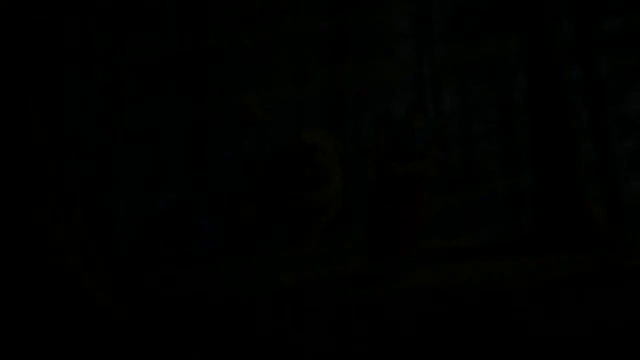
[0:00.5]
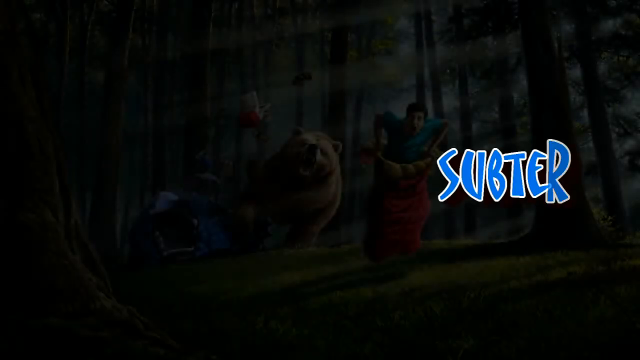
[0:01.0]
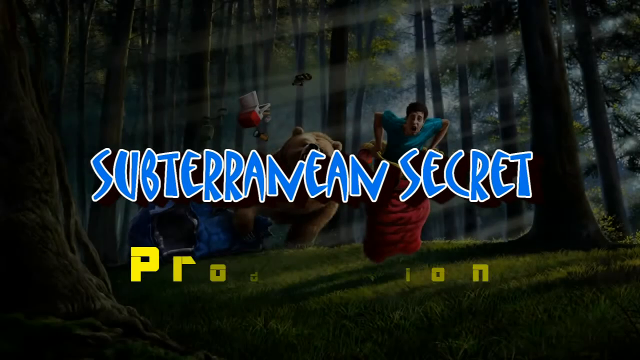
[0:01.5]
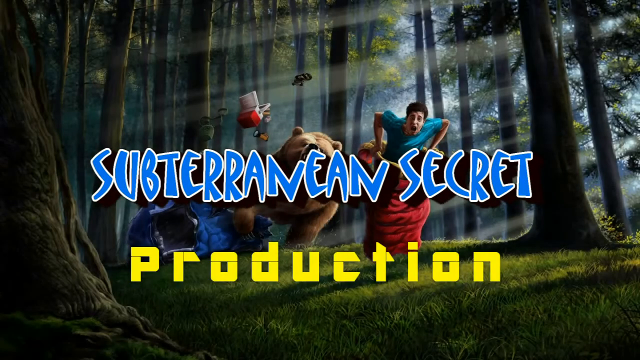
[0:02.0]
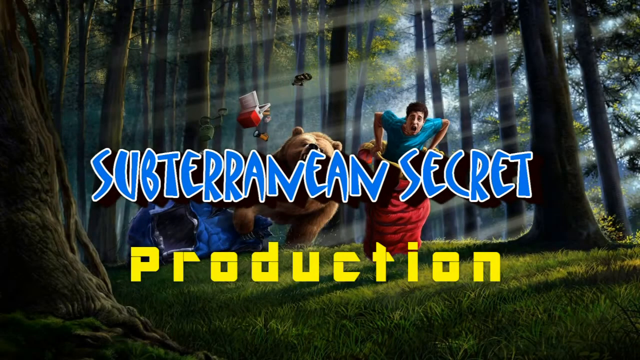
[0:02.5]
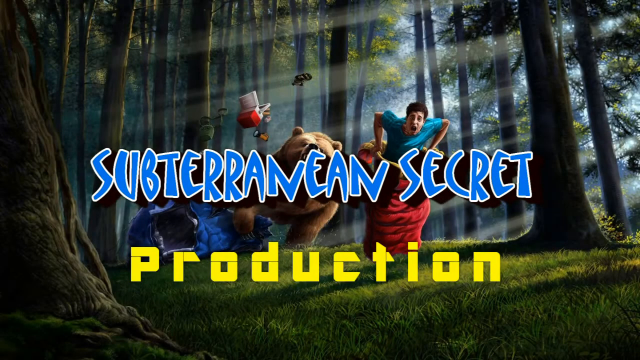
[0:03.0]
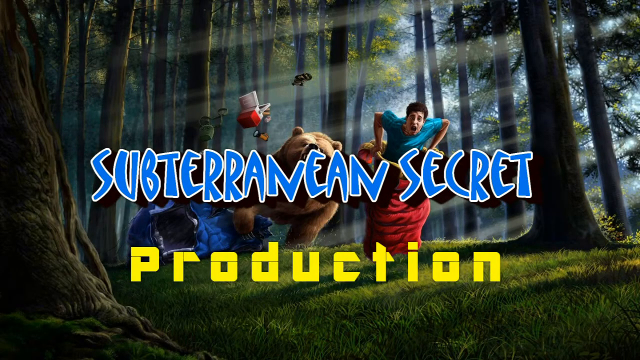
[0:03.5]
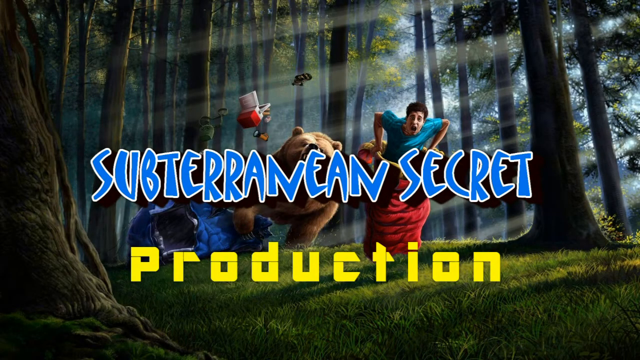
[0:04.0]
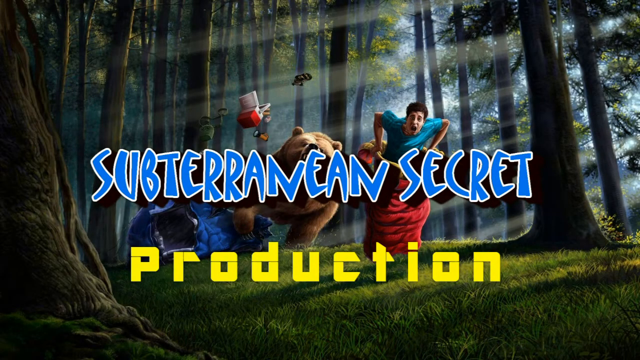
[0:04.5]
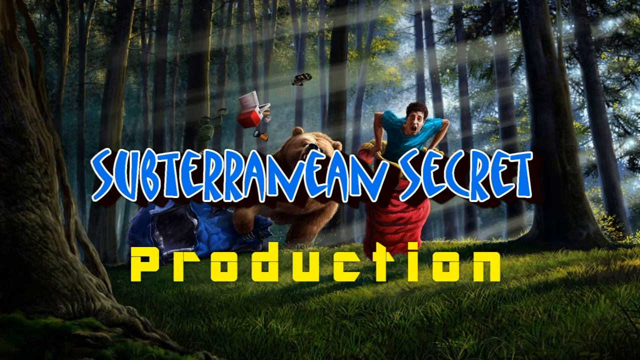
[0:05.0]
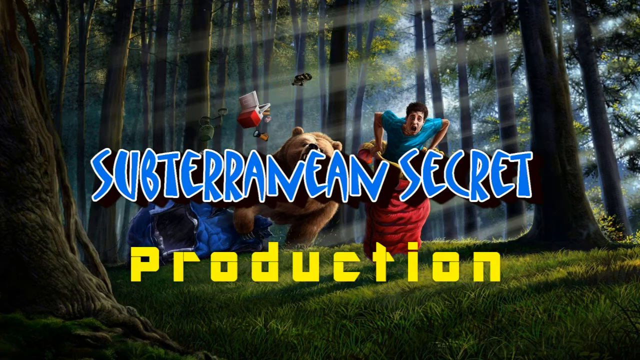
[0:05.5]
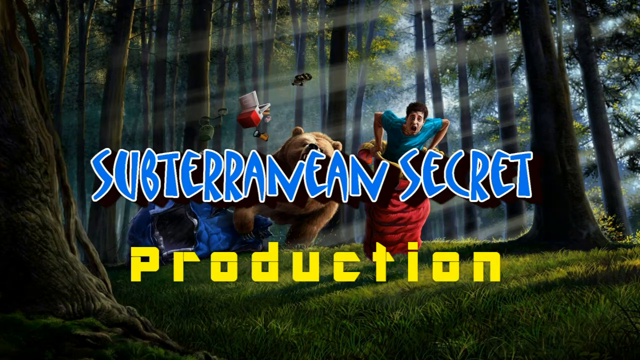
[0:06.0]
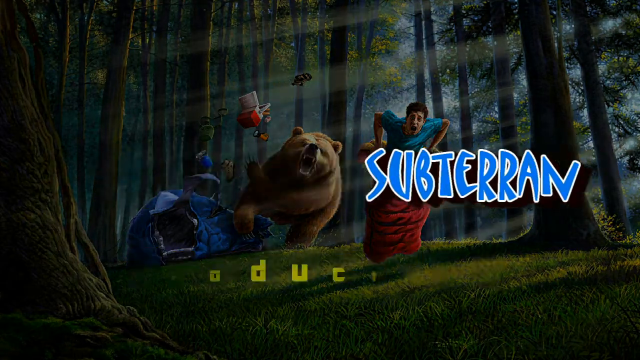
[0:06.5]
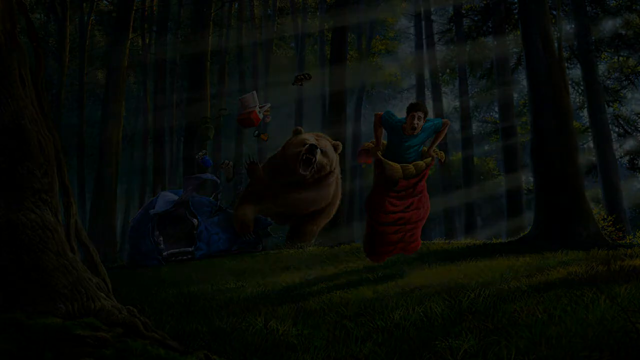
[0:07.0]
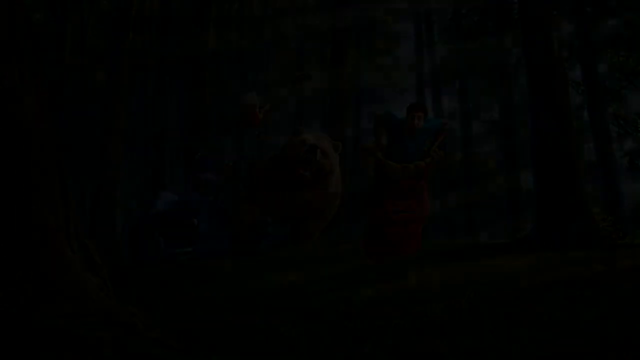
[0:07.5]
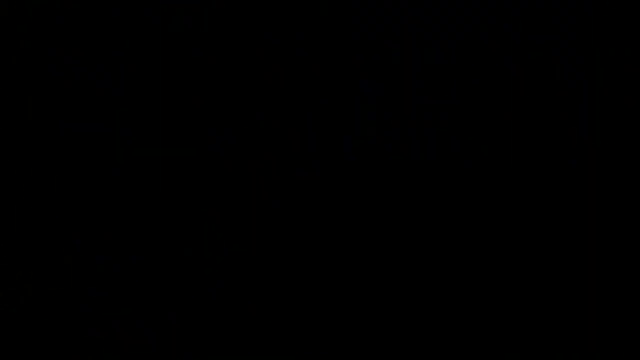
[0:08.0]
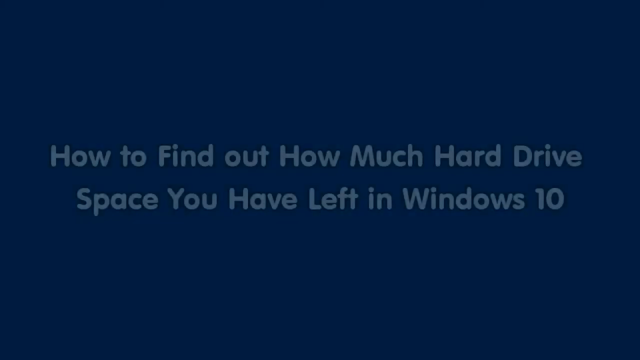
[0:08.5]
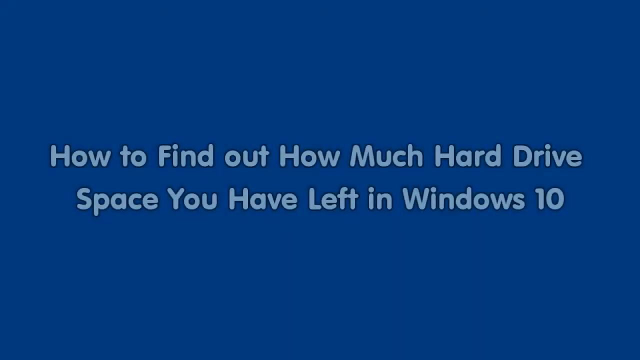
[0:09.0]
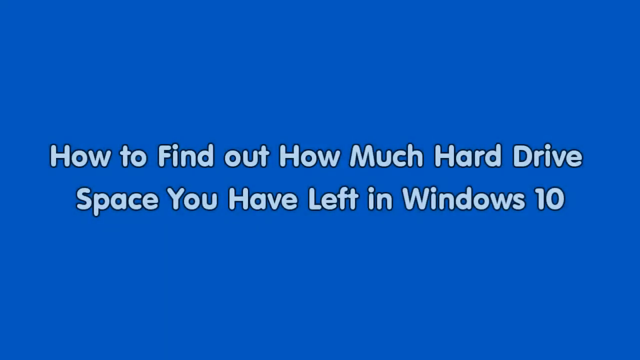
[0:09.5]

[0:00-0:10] The screen shows the words "Subterranean Secret Production." "Subterranean Secret" is written in blue in what looks like a handwritten kind of font with a white outline, and "productions" is written in a yellow font that looks high-tech. In the background is a still image of a young man in a blue shirt and a red sleeping bag running in a forest with a large brown bear. A red cooler is up in the air with all its food contents flying out, and a blue tent looks like it has been ripped open by the bear. Rays of sunlight cut through the tall trees behind them. Next comes a blue screen with the caption "How to find out how much hard drive space you have left in Windows 10."